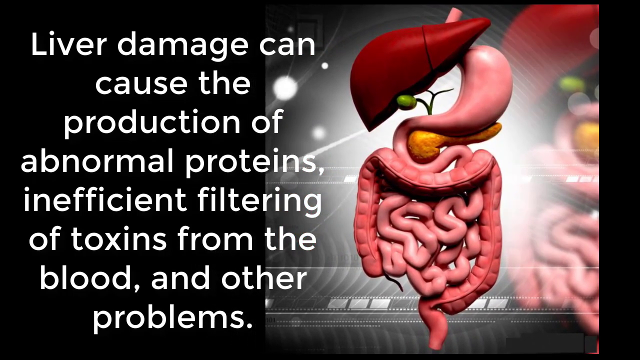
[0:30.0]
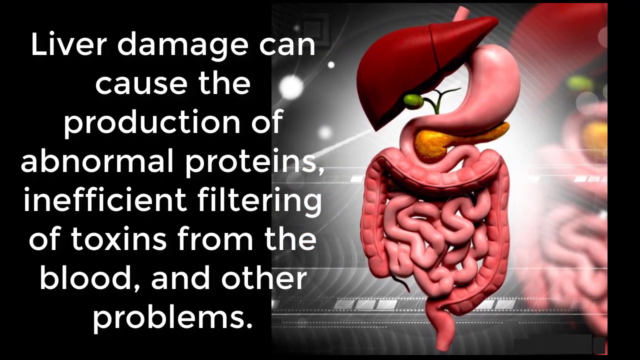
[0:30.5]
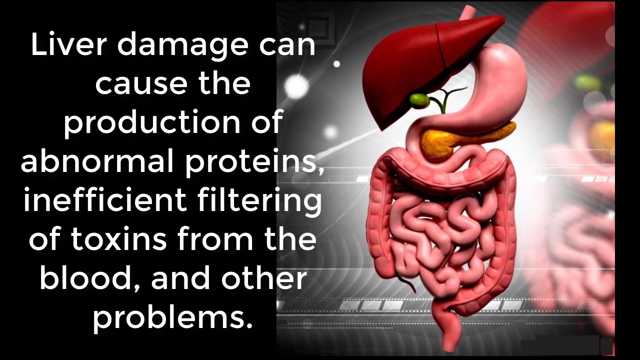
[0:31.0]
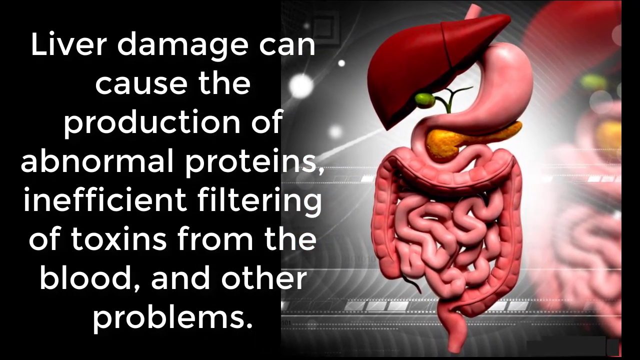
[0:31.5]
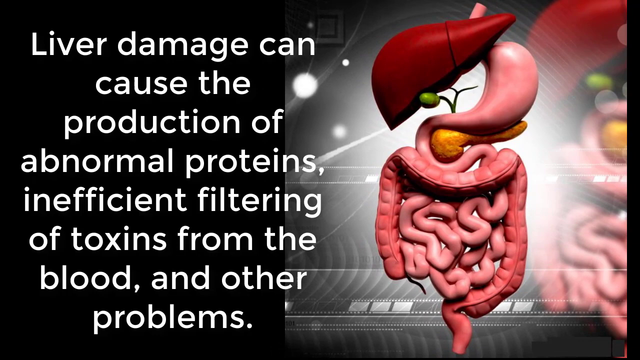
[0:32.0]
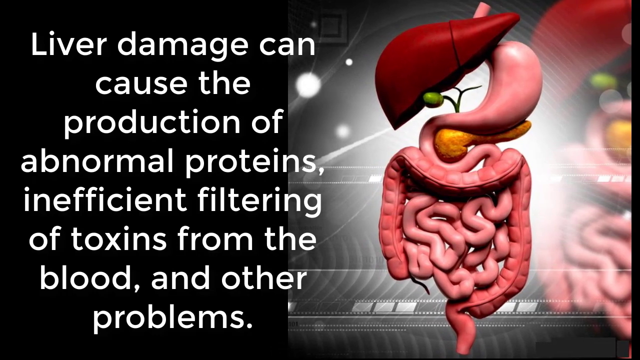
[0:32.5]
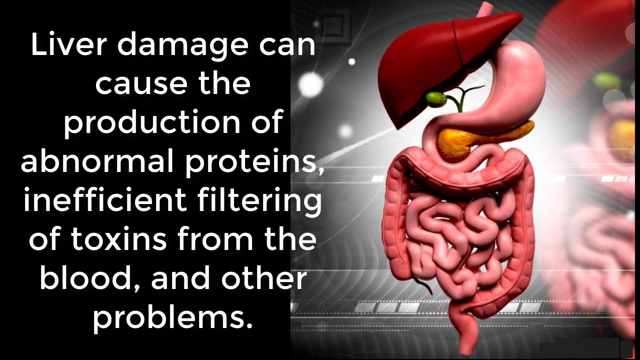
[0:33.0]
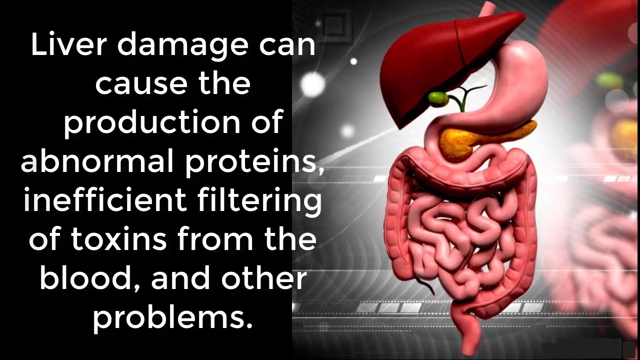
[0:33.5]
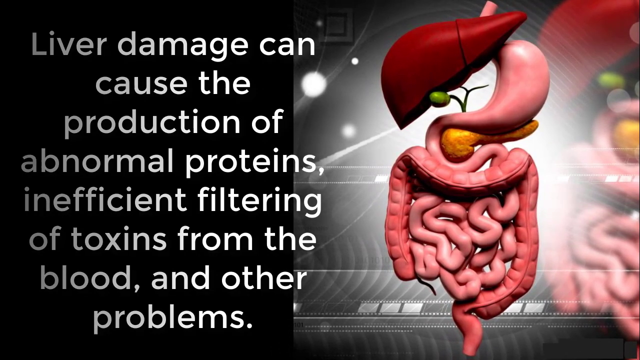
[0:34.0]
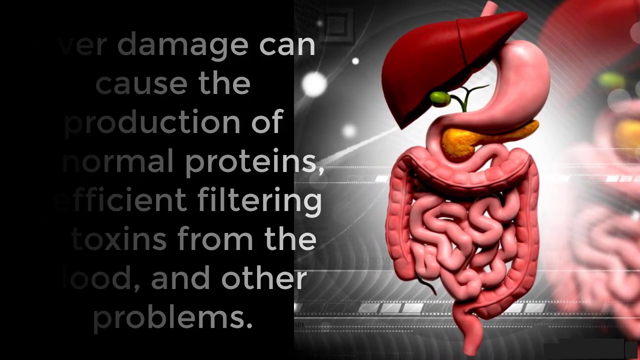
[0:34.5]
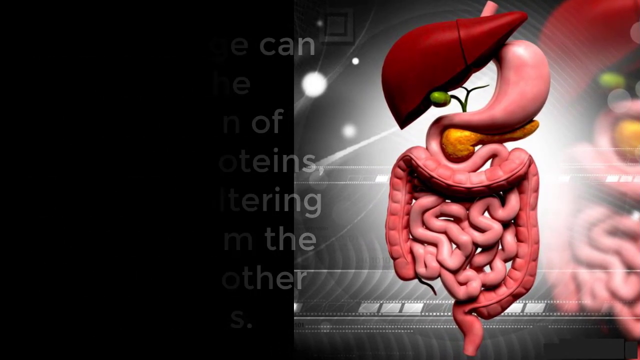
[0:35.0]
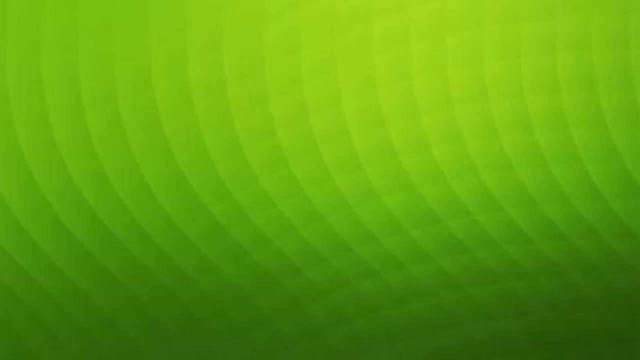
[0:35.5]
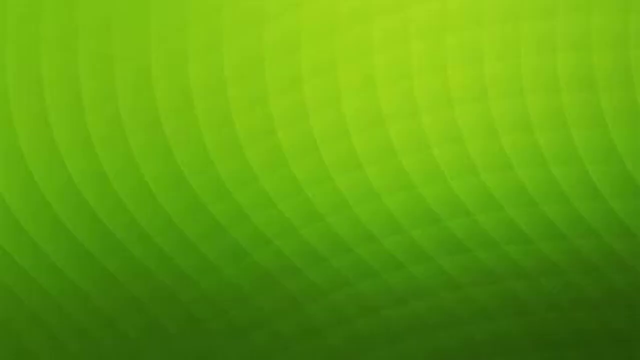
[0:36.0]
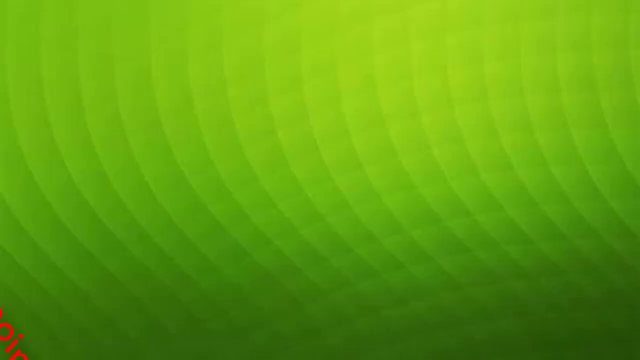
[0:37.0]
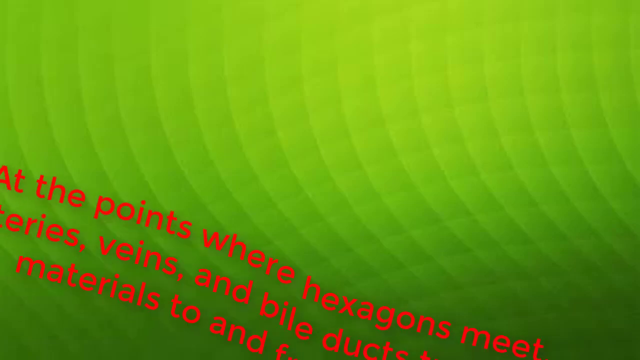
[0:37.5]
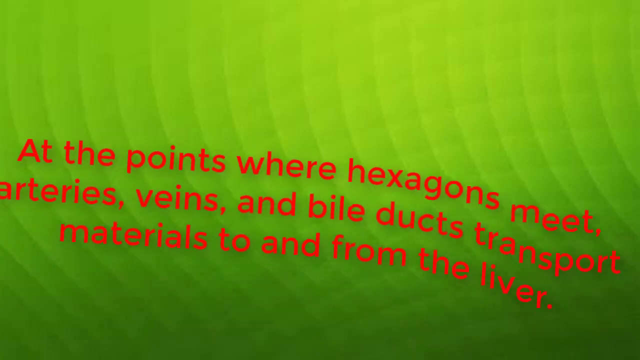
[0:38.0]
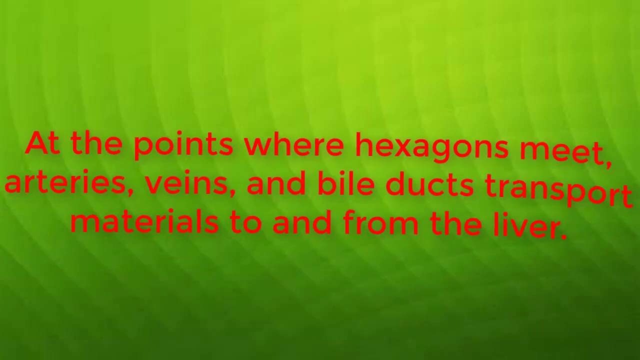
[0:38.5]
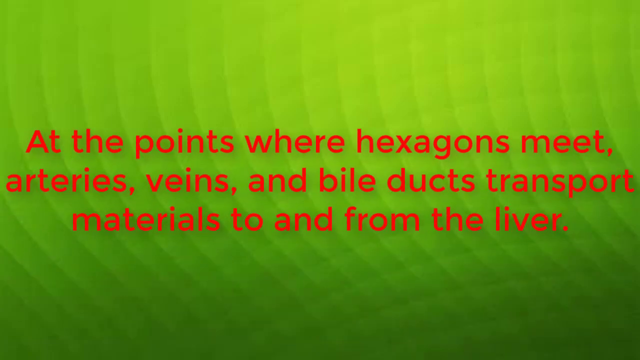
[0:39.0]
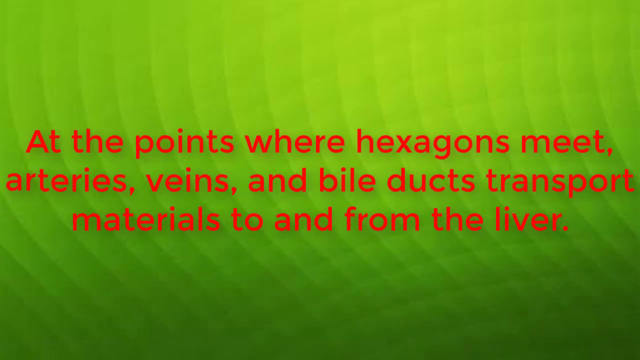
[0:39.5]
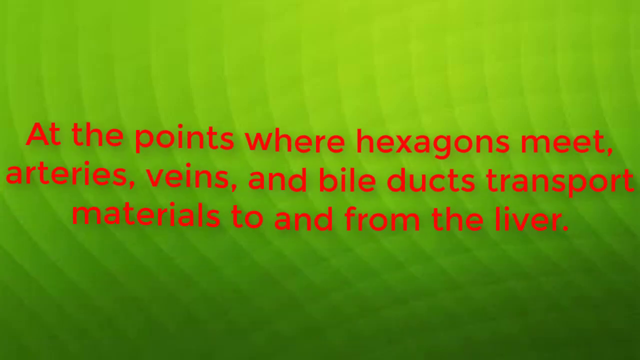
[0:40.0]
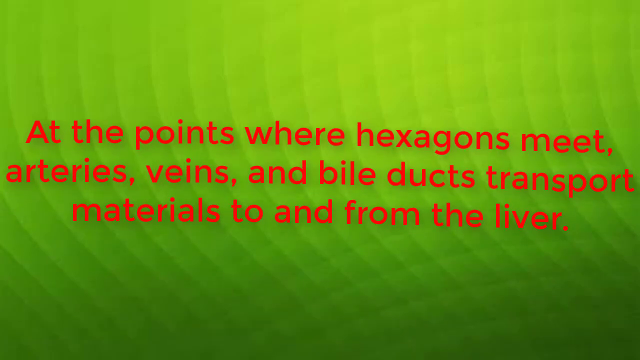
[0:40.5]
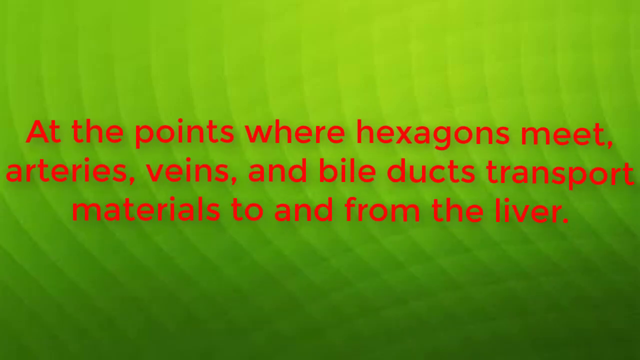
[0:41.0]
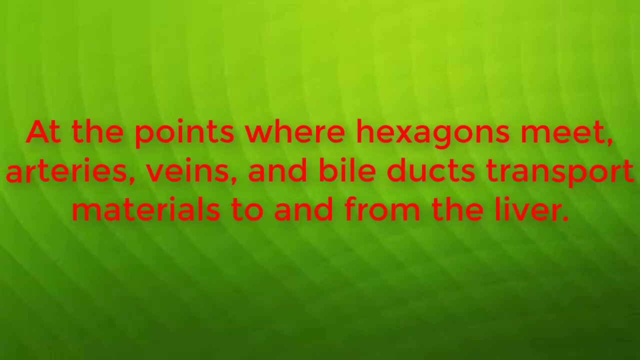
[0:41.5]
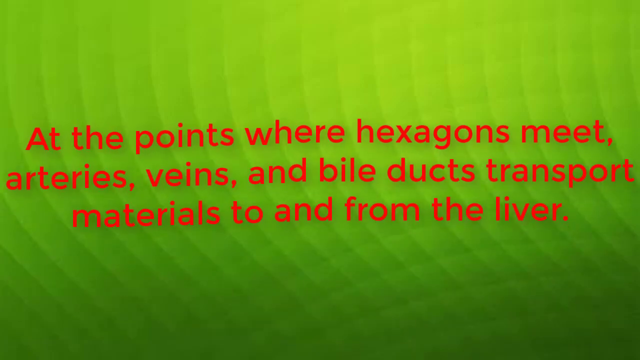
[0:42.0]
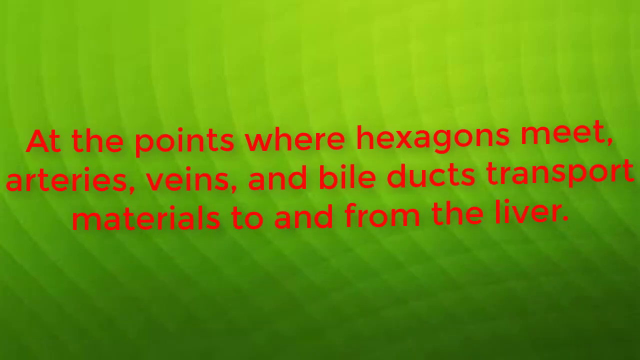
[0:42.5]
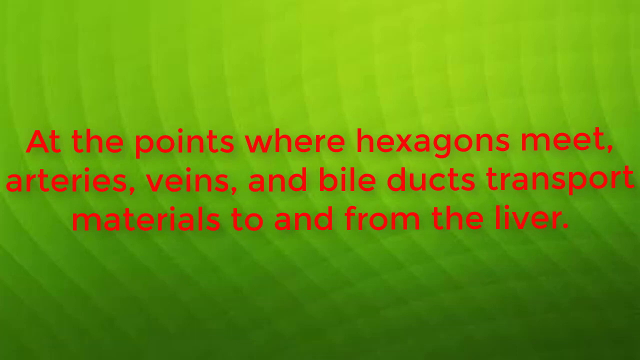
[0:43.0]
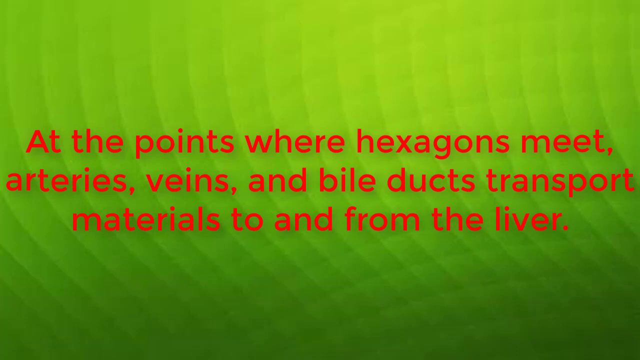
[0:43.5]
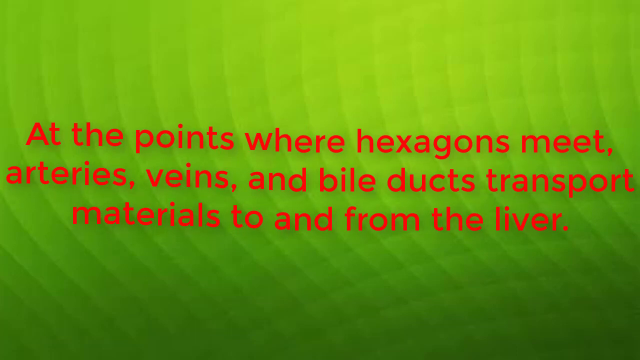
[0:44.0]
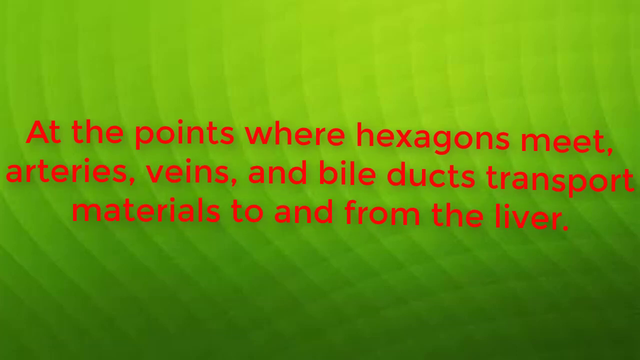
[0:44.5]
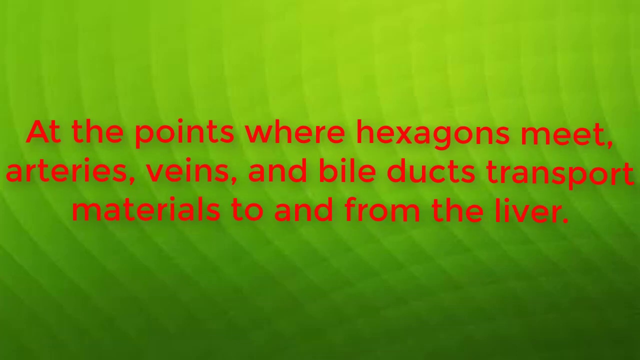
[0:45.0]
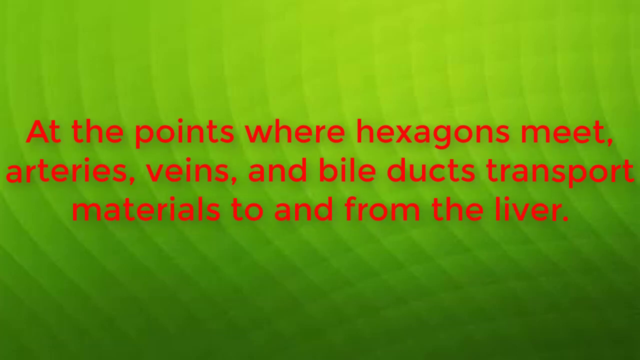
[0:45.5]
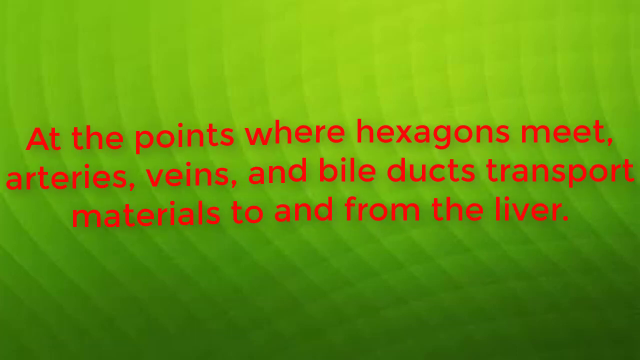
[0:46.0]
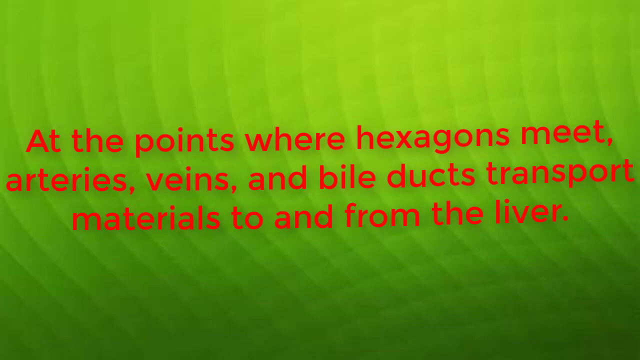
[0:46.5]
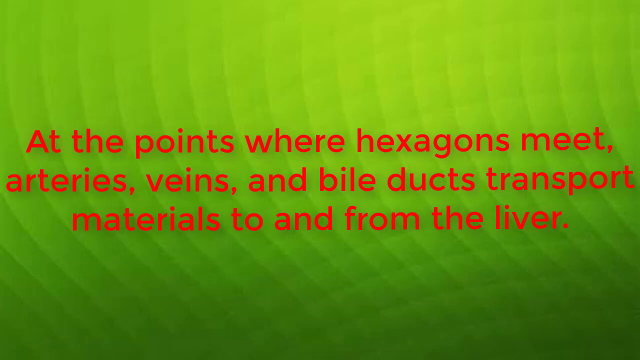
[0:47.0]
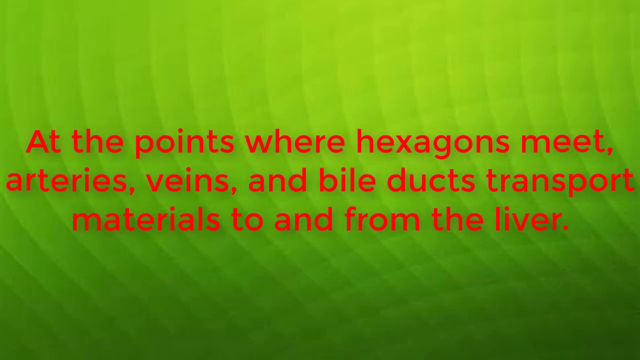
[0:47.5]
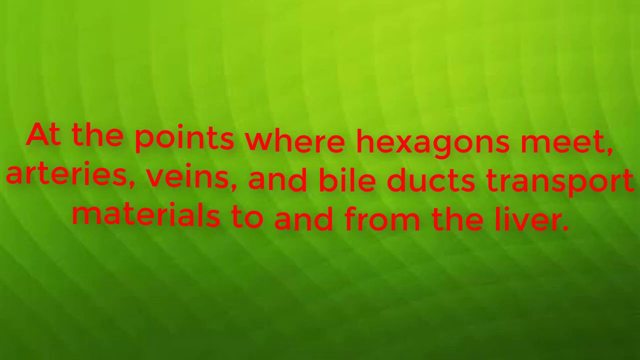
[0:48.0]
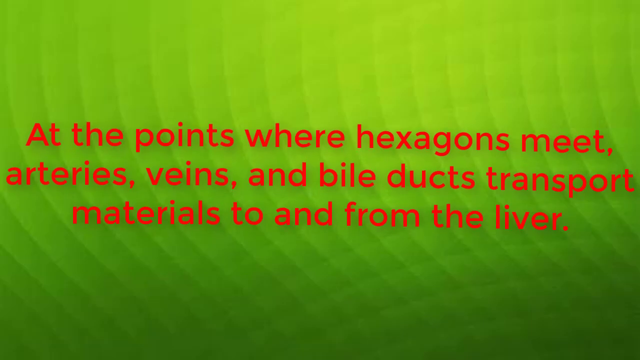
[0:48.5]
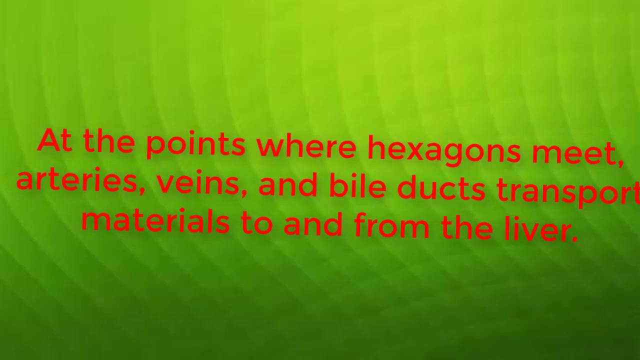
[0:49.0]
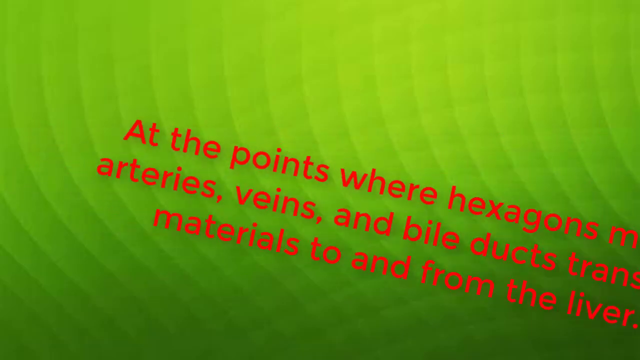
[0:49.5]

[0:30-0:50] What appears to be white text in the foreground reads "liver damage can cause the production of abnormal proteins, inefficient filtering of toxins from the blood and other problems". Behind it is a picture of the intestines and liver with a white, see-through background behind that; the same image also appears in the background, a little bigger, and the left side is a black background. The image seems to move from left to right, then stops. It then cuts to a slide with a green background that looks kind of wavy, and red words fly into the foreground reading "at the point where hexagons meet arteries veins and bile ducts transport materials to and from the liver".